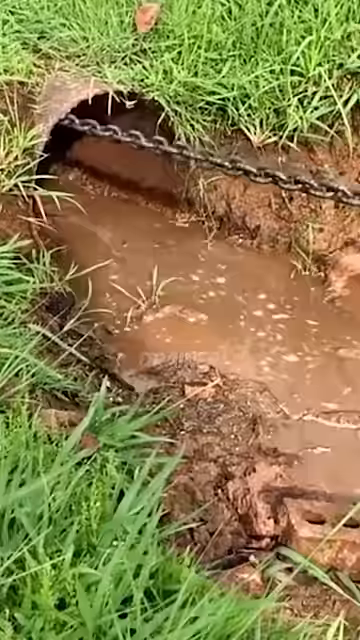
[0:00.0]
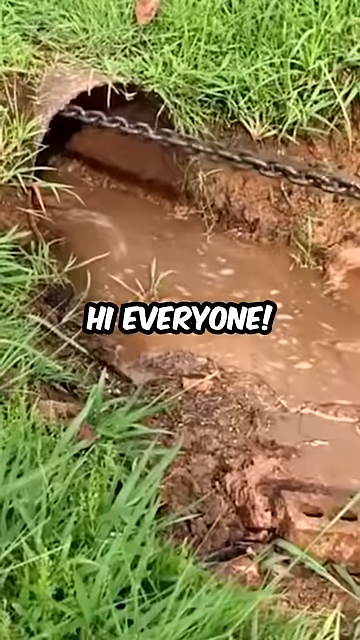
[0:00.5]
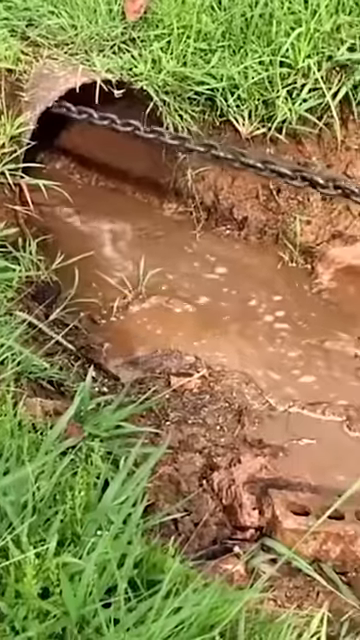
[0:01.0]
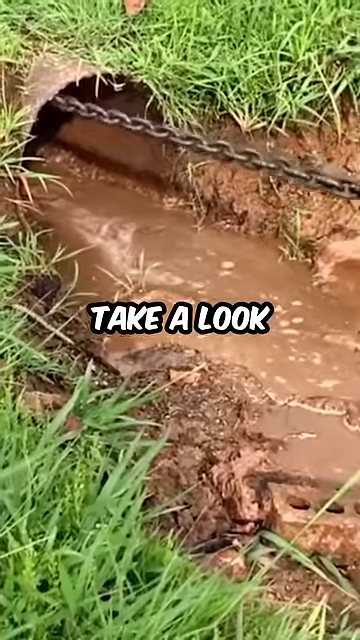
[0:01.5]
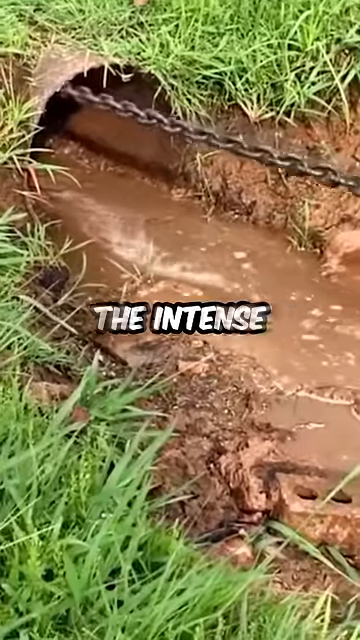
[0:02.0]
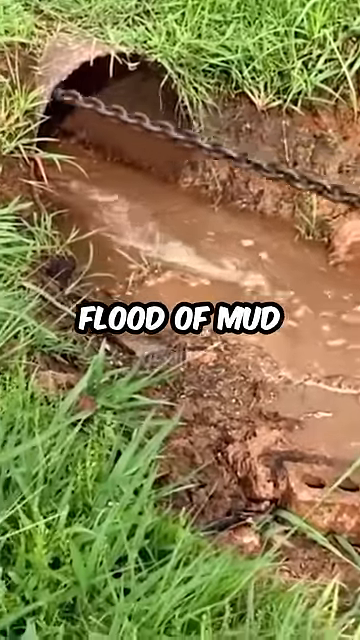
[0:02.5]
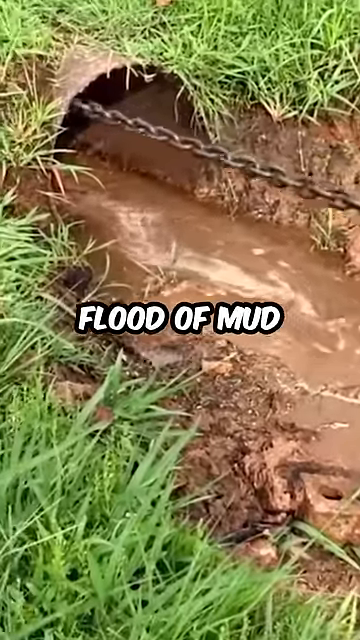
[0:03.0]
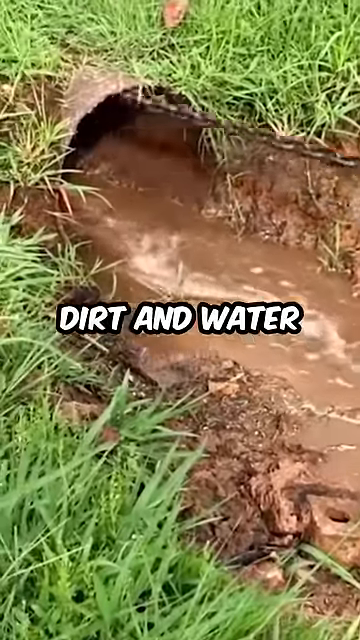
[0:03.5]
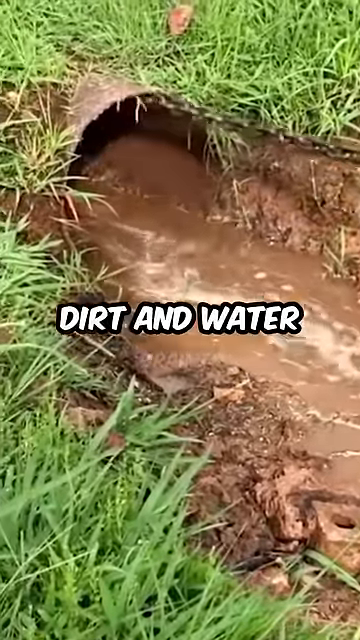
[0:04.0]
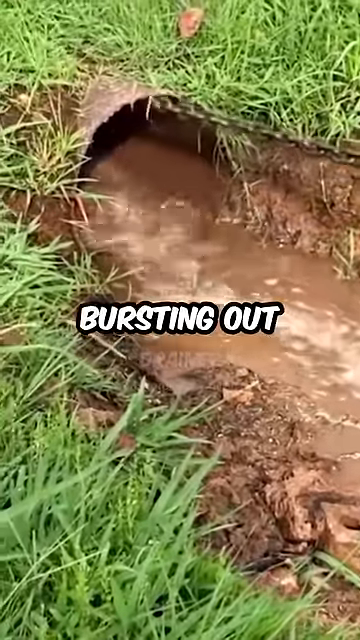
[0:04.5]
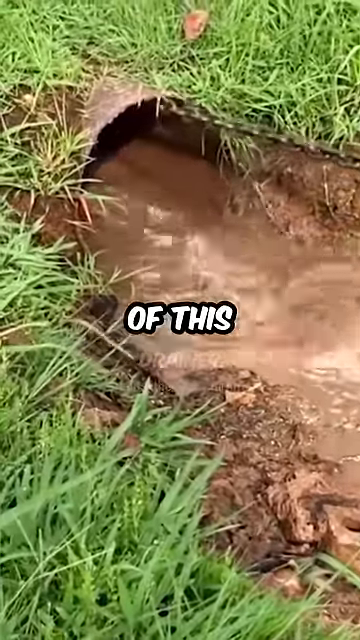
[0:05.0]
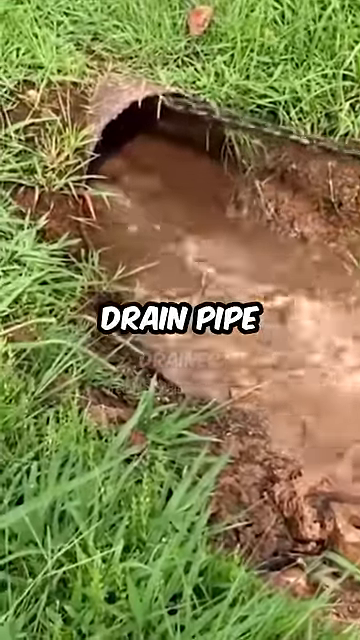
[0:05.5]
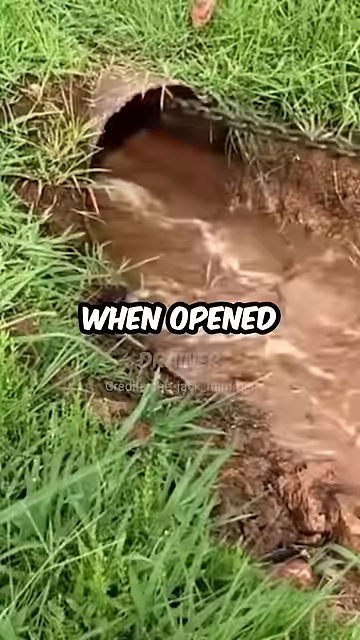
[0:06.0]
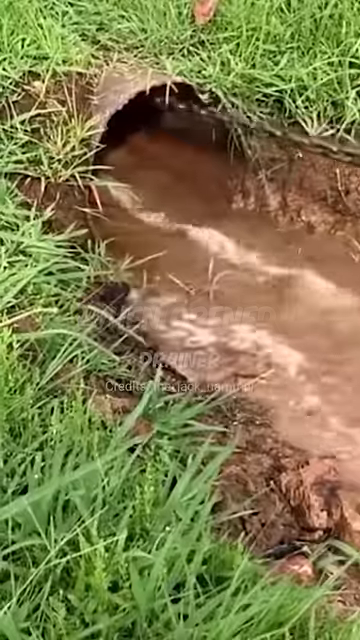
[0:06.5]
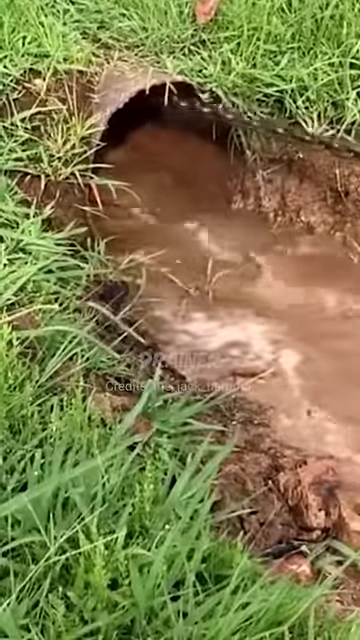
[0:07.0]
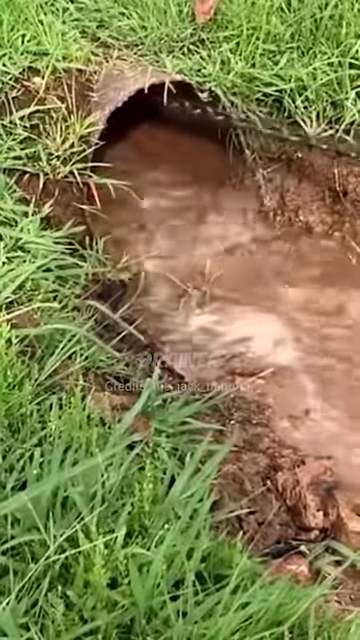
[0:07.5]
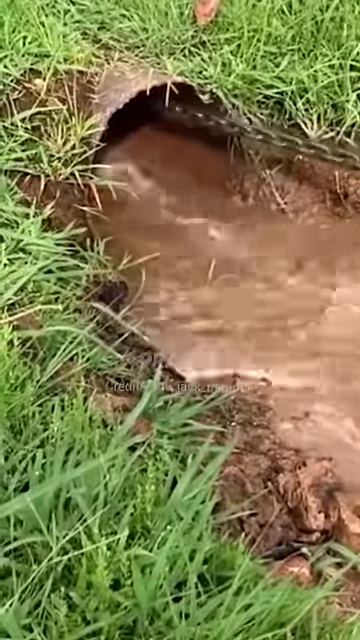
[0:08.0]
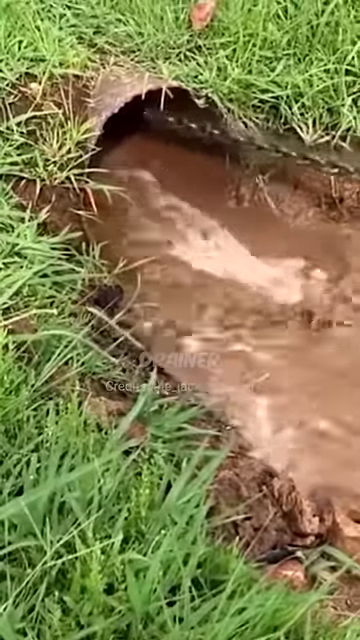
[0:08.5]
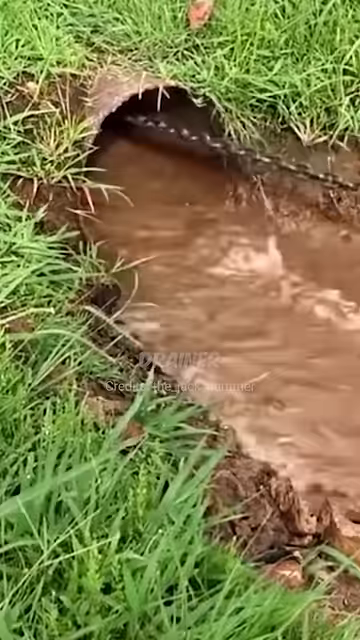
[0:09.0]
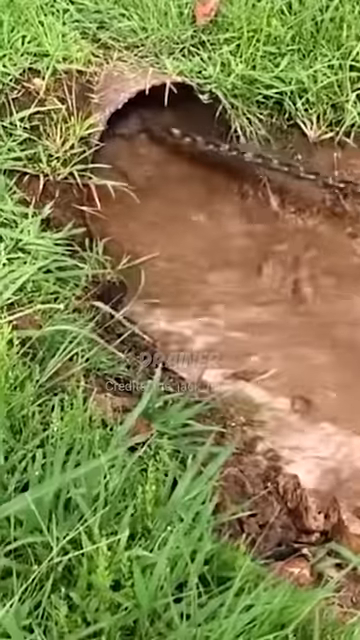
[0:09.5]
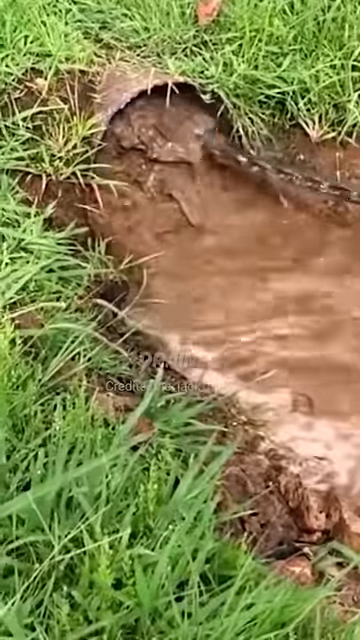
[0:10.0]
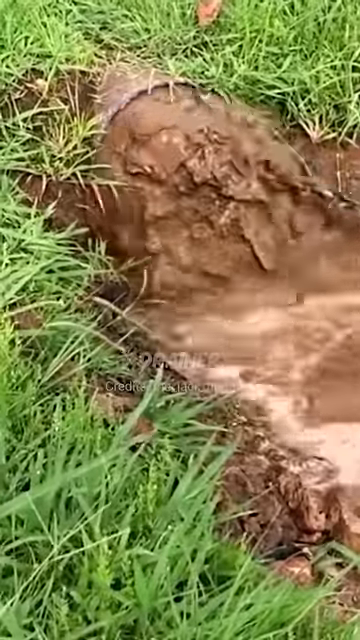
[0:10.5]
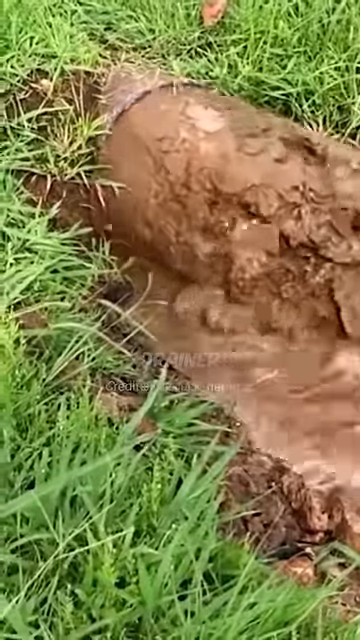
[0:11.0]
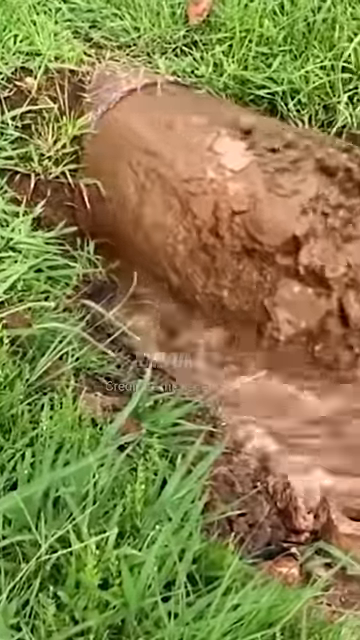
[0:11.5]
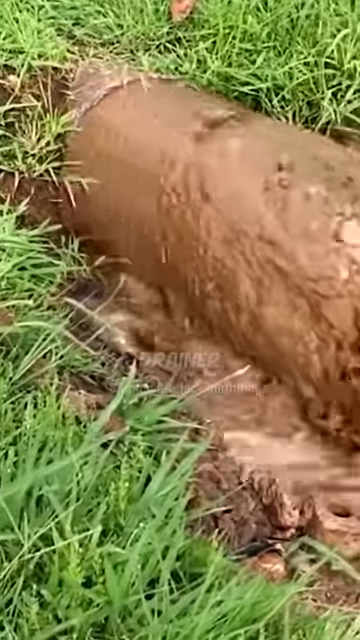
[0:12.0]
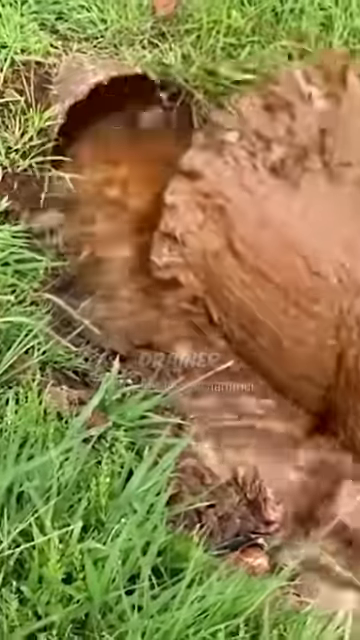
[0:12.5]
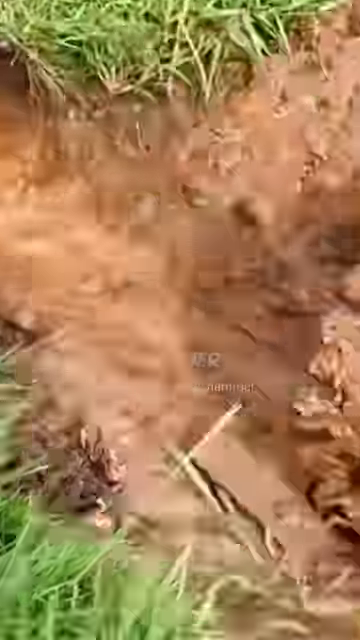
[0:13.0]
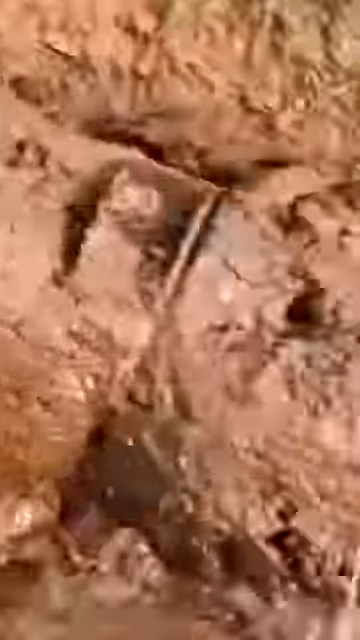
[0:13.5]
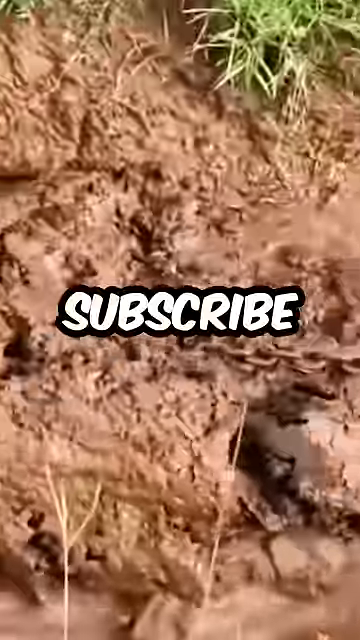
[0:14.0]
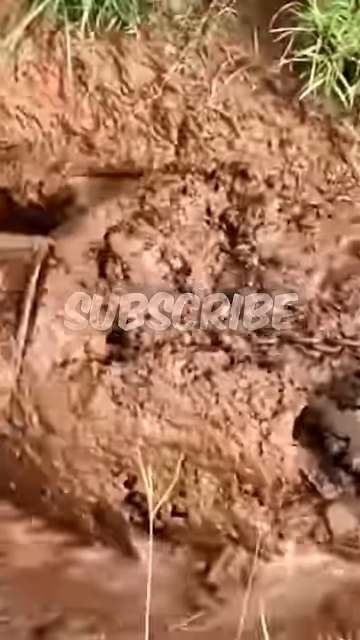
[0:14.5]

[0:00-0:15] A dirty river runs through the middle of the frame, with grass surrounding it along the bottom and top of the screen. A chain comes out of the river tunnel. At the very beginning, white text reads "hi everyone!" The next text reads "take a look at the intense flood of mud dirt and water" as the chain is pulled to the right. The text then stops while more and more water is pushed out of the pipe as the chain continues to be pulled to the right. The water keeps flowing, and then a giant brown clump of dirt and debris, clearly a blockage, is pulled out of the pipe in a very thick, cylindrical log shape. The camera moves to the right as the blockage eventually breaks apart and is left in the river. The last text, "subscribe", appears in white with a black outline in the middle of the video.